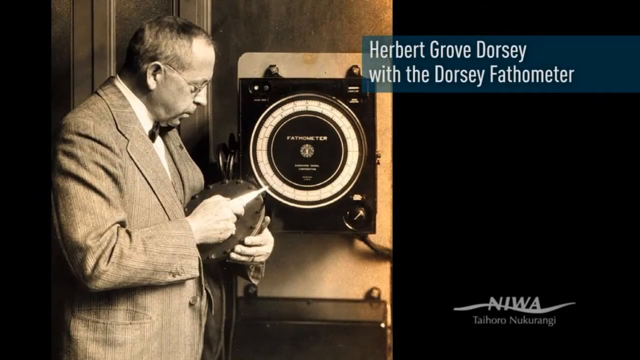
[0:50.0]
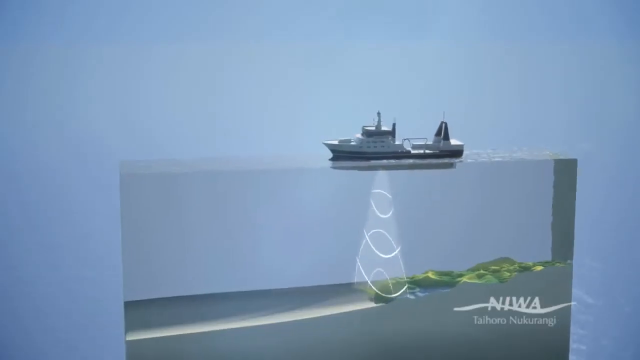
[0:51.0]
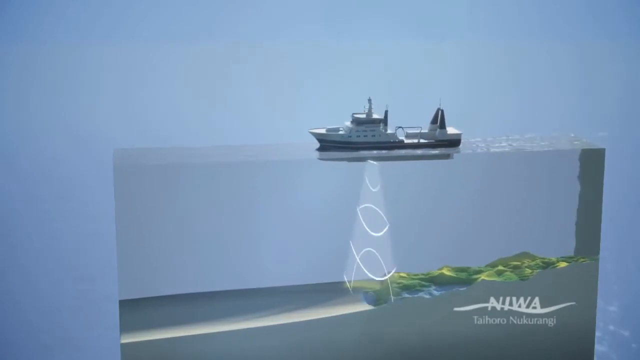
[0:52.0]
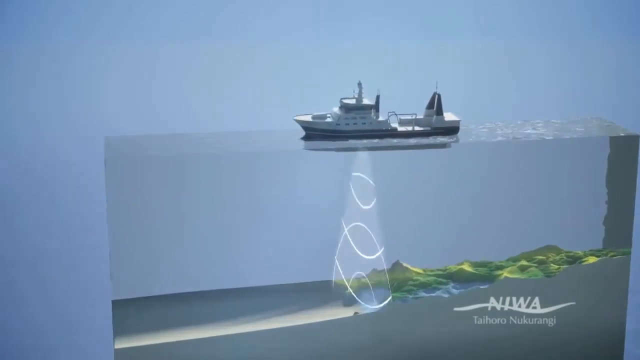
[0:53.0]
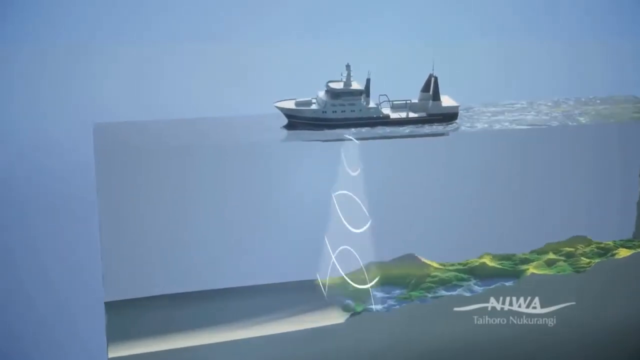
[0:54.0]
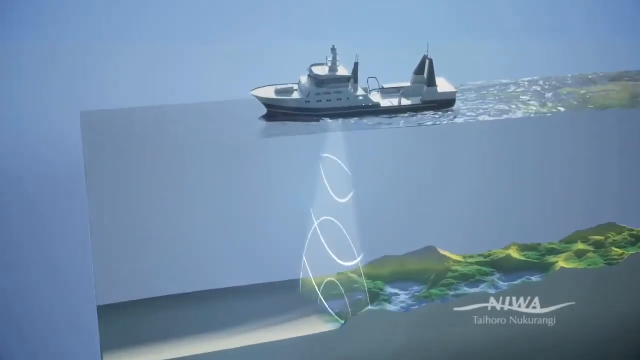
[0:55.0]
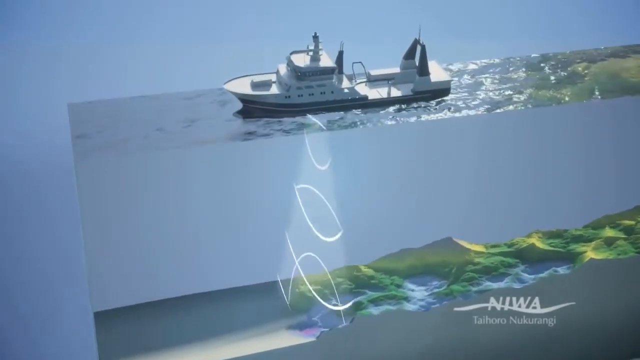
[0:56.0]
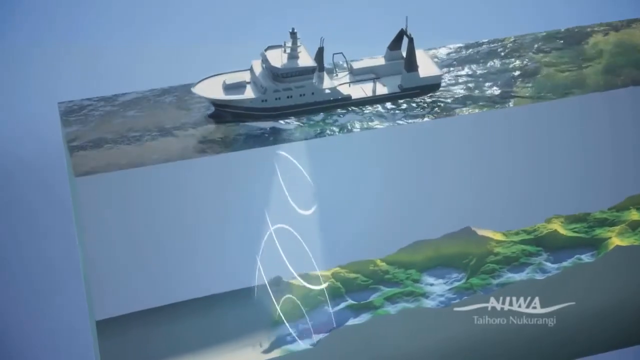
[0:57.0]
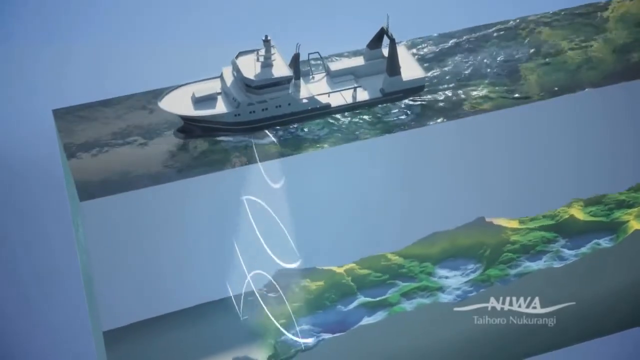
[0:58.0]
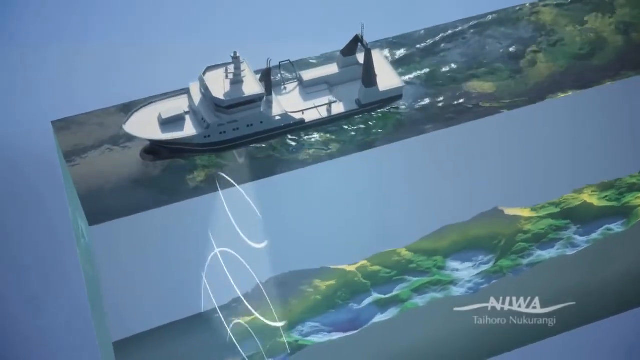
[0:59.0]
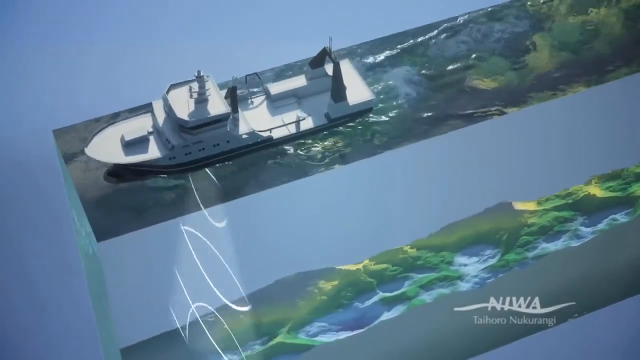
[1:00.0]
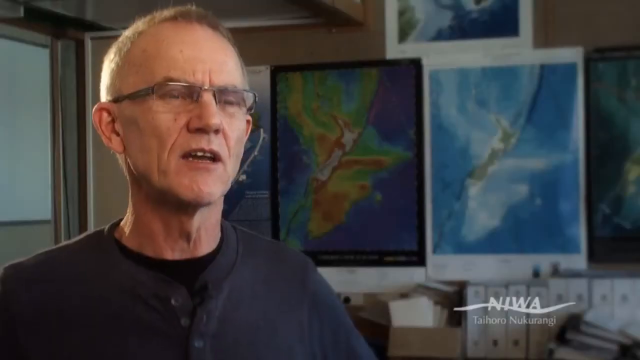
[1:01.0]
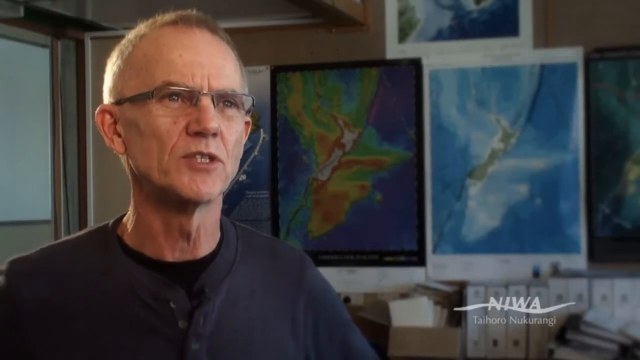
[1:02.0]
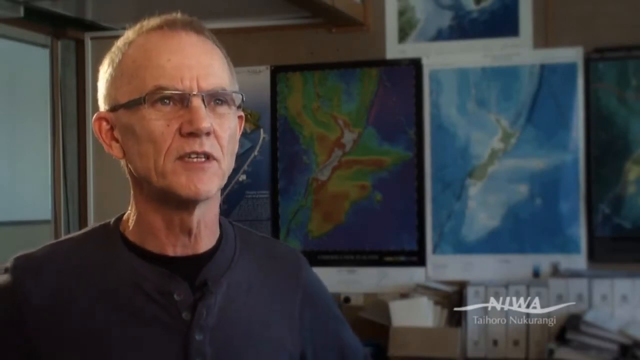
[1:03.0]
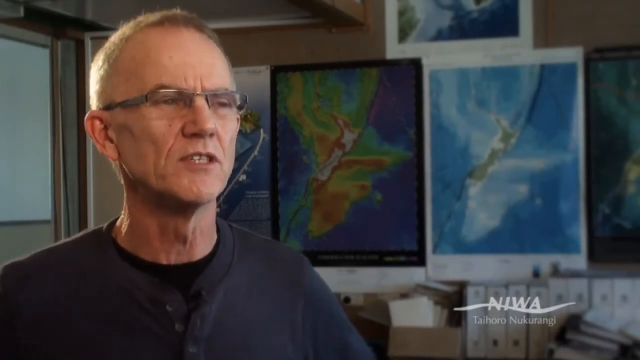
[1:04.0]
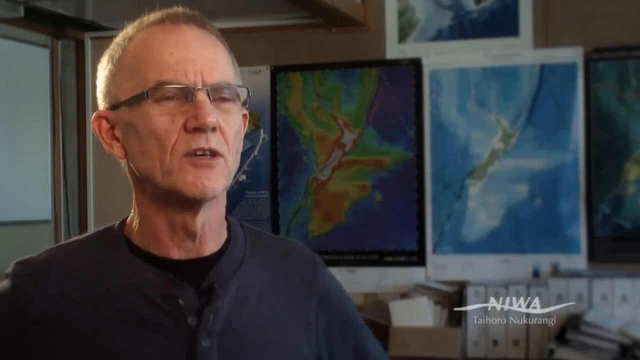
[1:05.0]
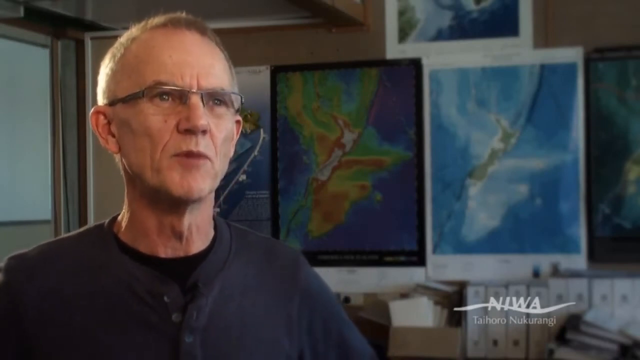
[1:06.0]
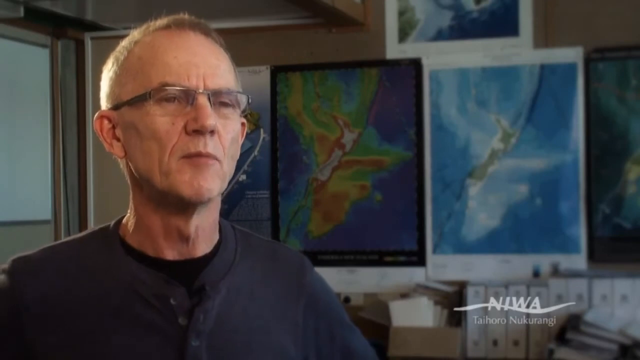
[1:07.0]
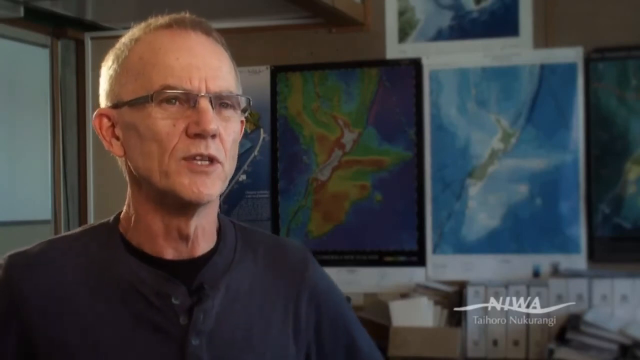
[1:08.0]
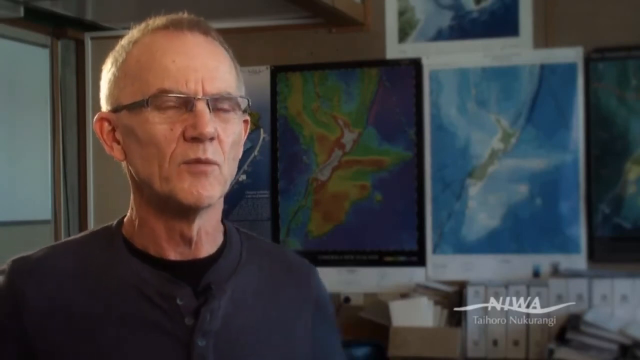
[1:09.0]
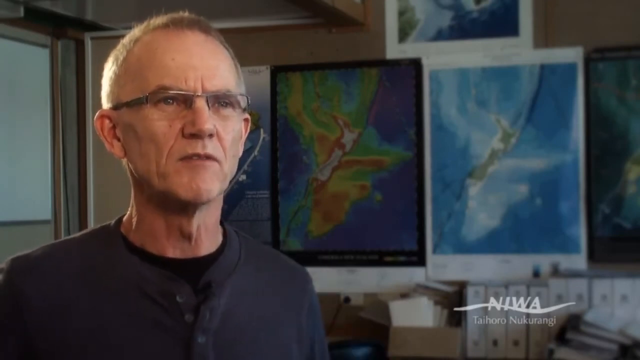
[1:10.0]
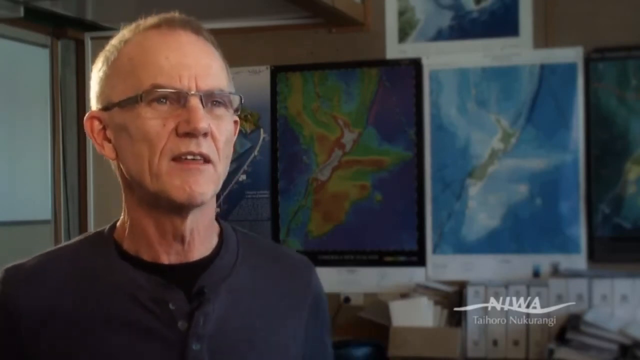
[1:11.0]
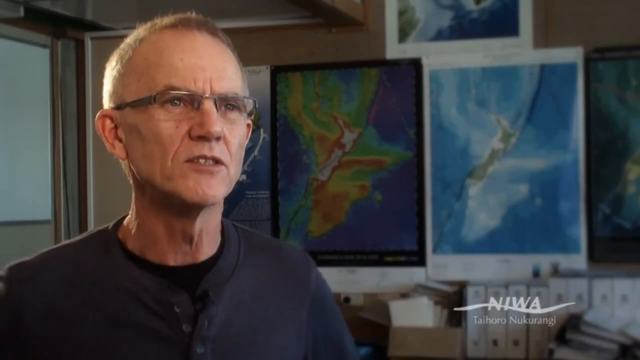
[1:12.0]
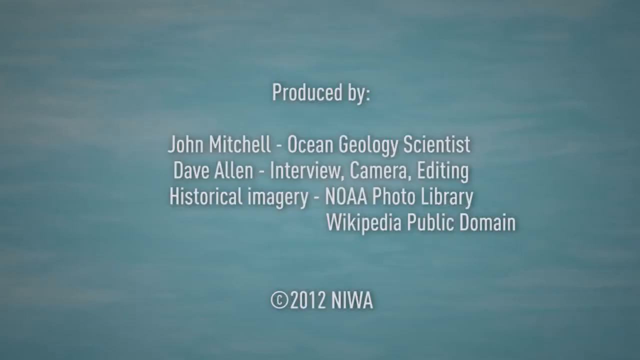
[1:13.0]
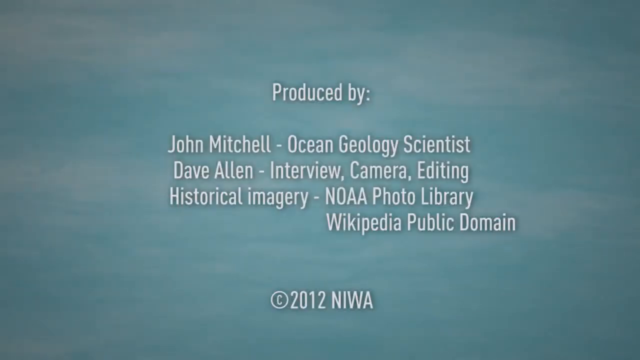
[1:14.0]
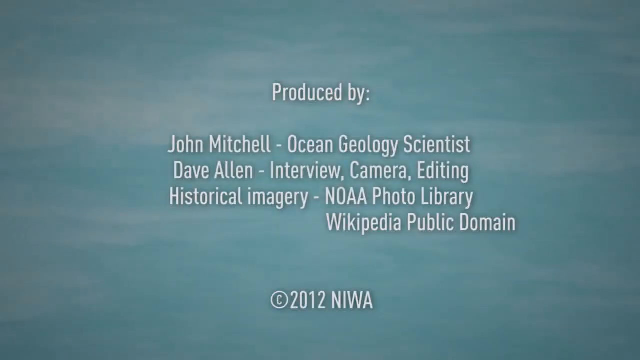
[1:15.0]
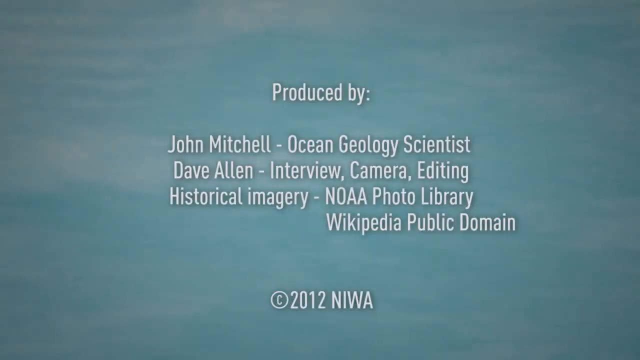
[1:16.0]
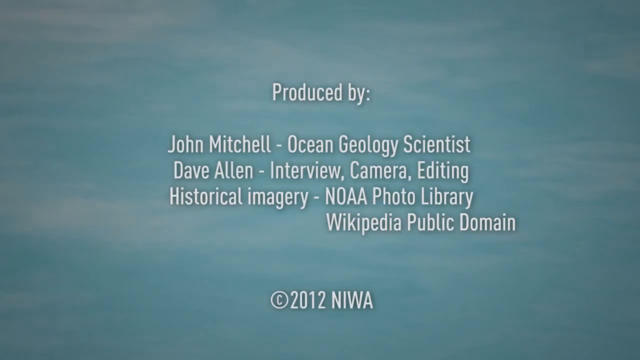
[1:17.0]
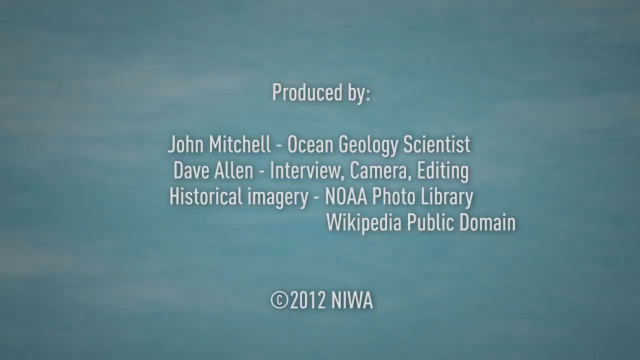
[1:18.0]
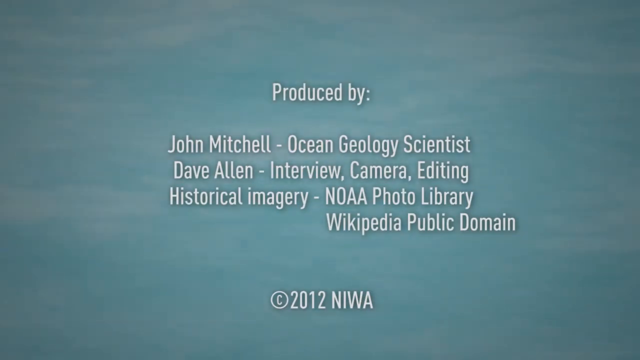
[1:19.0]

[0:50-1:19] An elderly man stands next to a machine attached to a wall. He wears a light-colored suit, a white shirt and what appears to be a bow tie, along with glasses, and has short, receding hair. In his left hand he holds a circular object. A caption on the image reads "Herbert Grove Dorsey, with the Dorsey bathometer". The machine on the wall is rectangular and black, and on its face is a circular feature that may contain numbers, presumably for obtaining readings. The next shot is a virtual image of a boat floating along water, with what appears to be radar or LiDAR being used to map the ocean floor. The boat, with a dark hull and a white outside, moves from right to left across the screen, and the image zooms in and over the boat as it continues to map the ocean bottom. The final shot shows a man talking to the camera. He is Caucasian and in his mid to late 50s, with short hair and glasses, and wears a dark t-shirt. Behind him on the wall are various aerial photos or images of New Zealand.